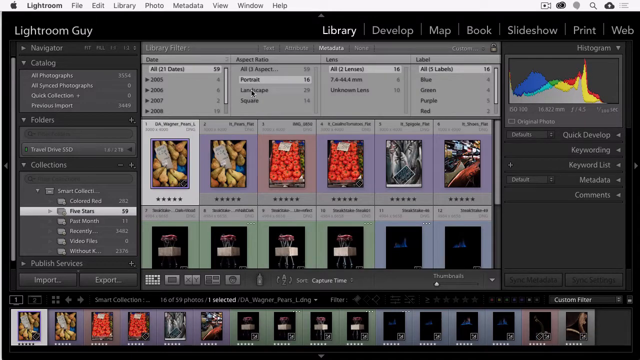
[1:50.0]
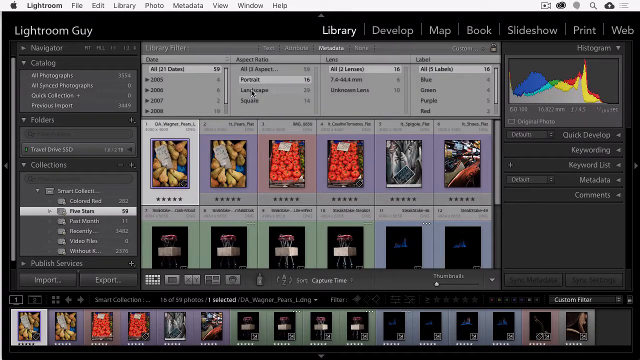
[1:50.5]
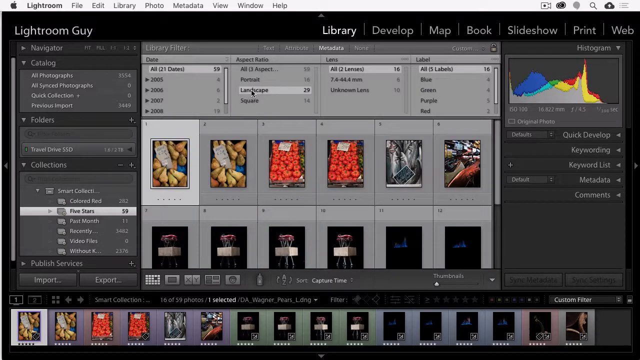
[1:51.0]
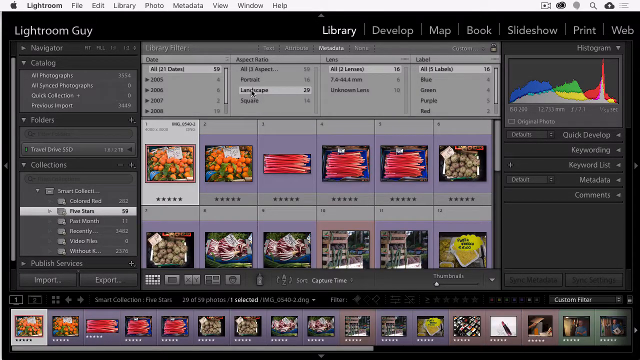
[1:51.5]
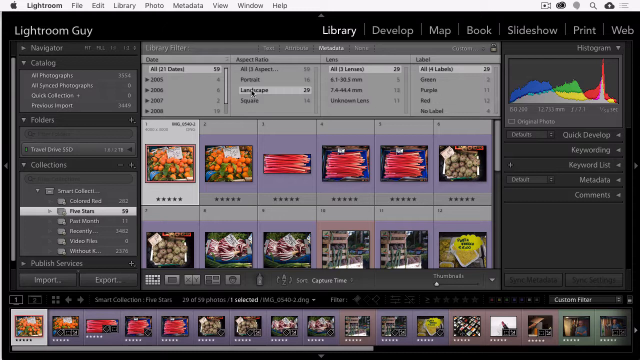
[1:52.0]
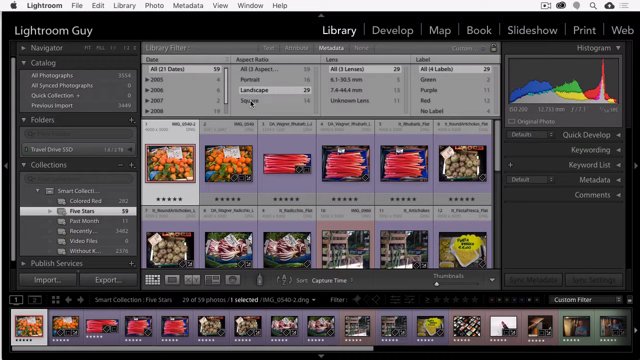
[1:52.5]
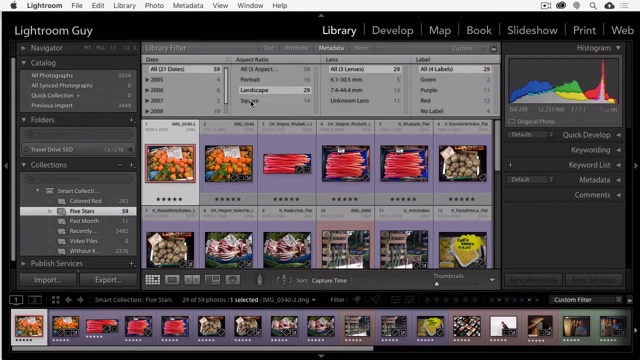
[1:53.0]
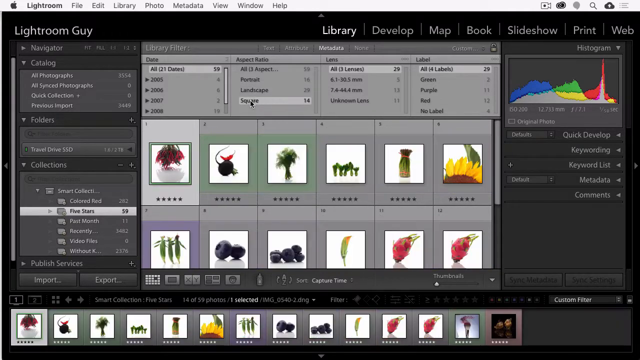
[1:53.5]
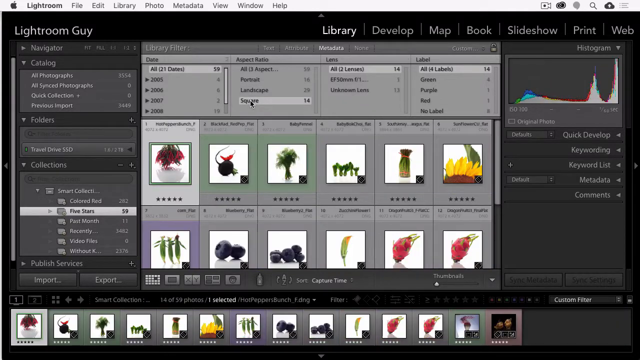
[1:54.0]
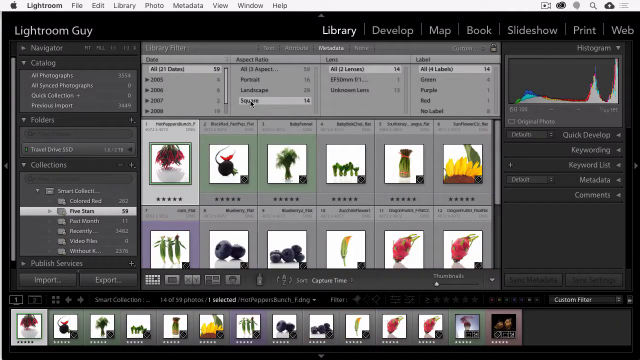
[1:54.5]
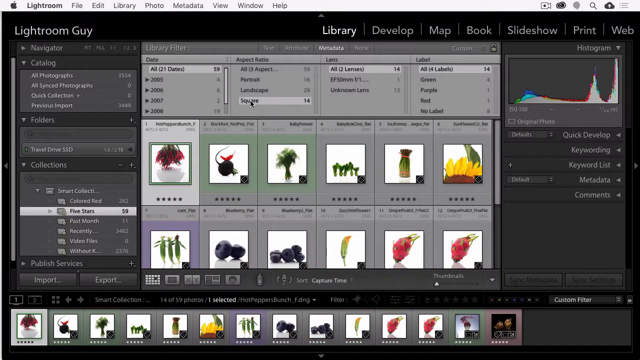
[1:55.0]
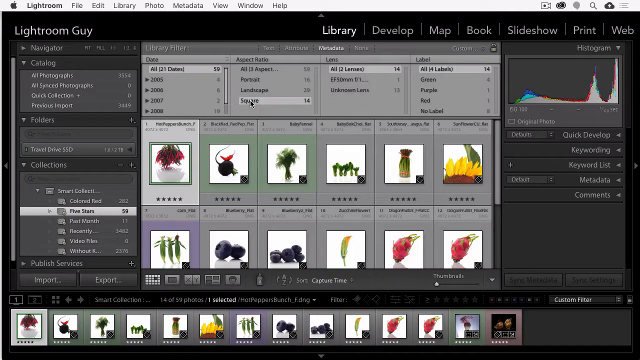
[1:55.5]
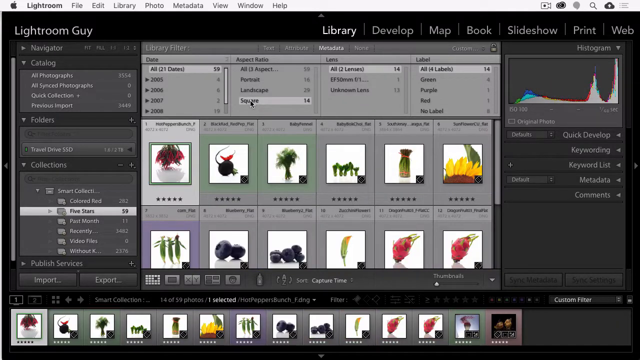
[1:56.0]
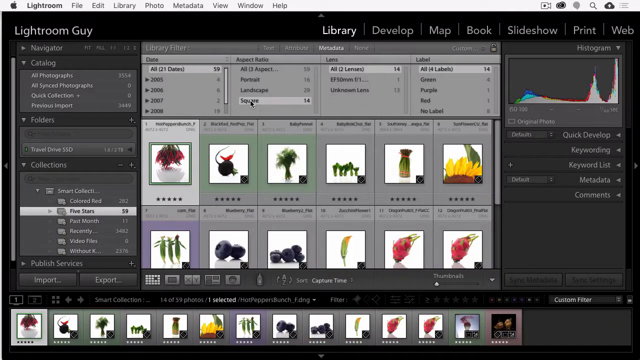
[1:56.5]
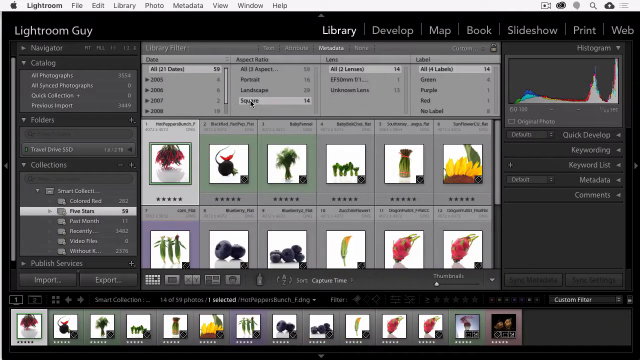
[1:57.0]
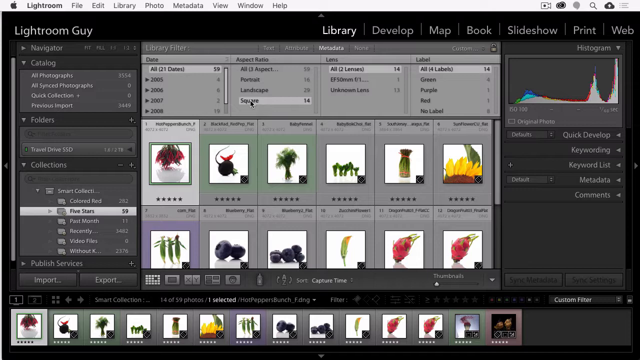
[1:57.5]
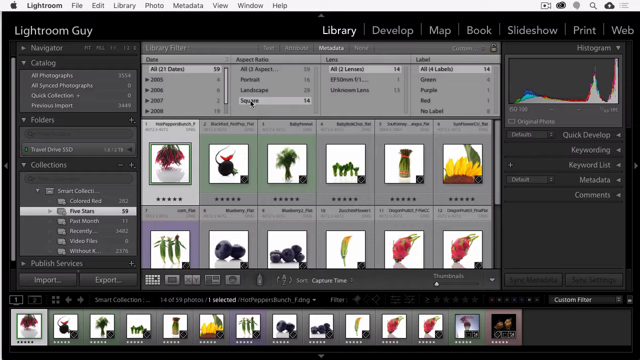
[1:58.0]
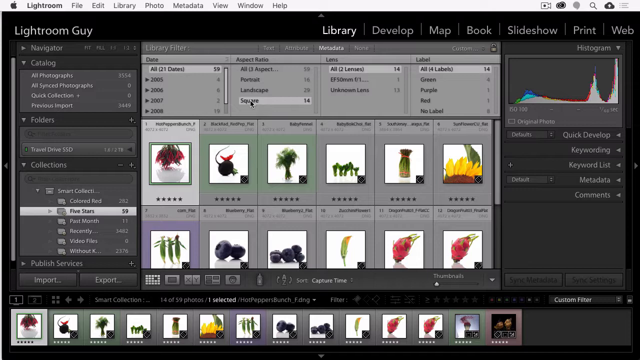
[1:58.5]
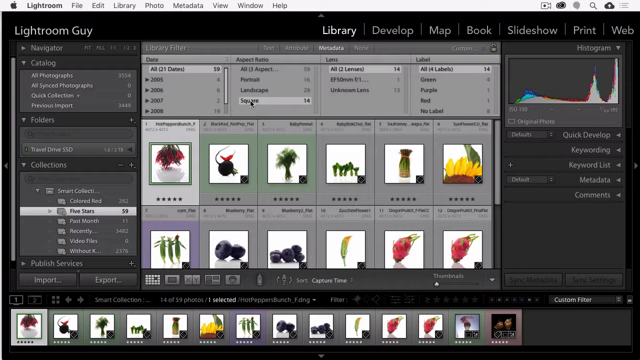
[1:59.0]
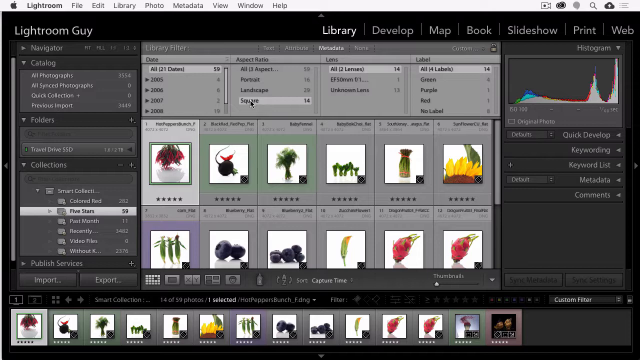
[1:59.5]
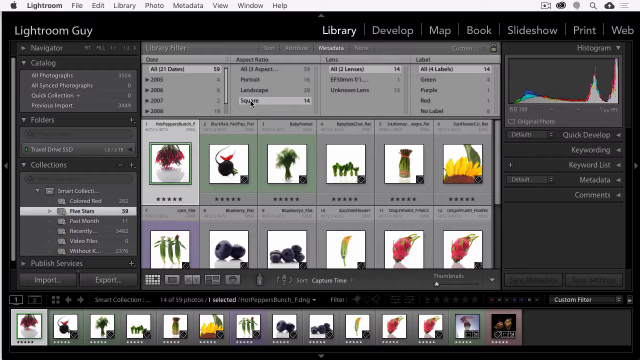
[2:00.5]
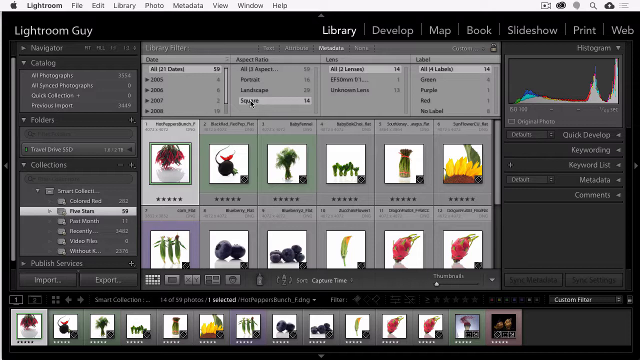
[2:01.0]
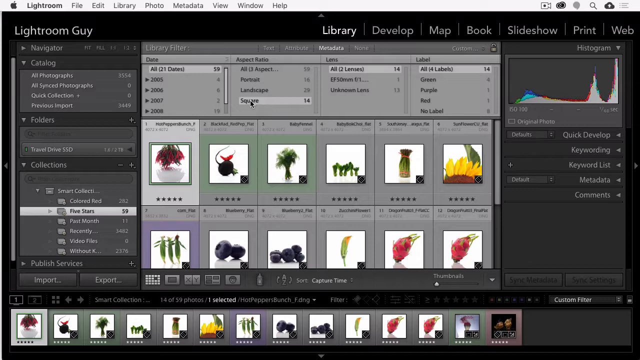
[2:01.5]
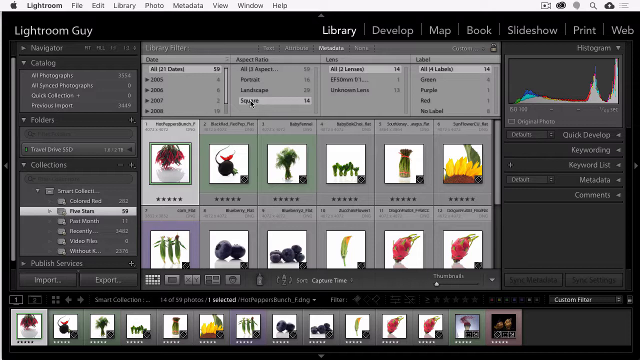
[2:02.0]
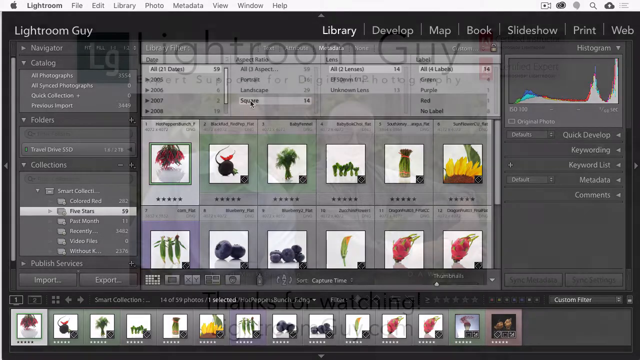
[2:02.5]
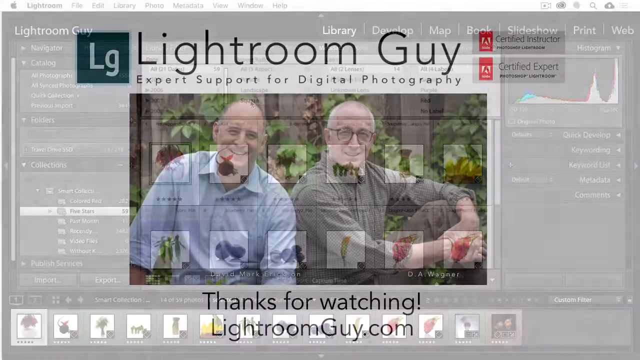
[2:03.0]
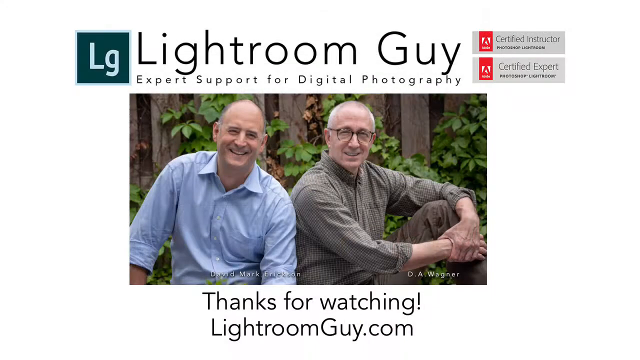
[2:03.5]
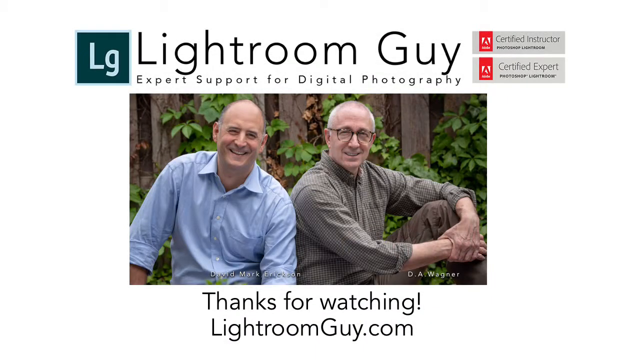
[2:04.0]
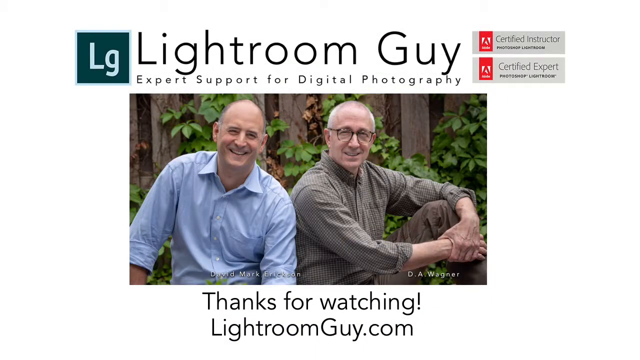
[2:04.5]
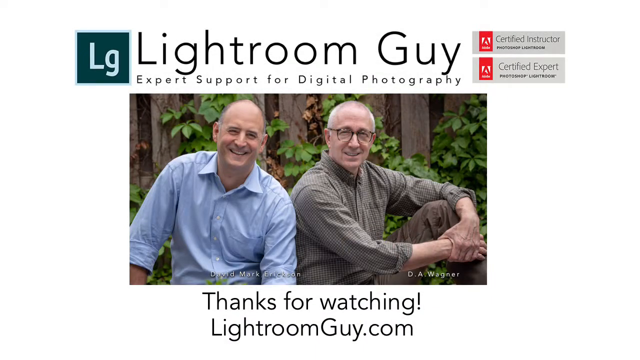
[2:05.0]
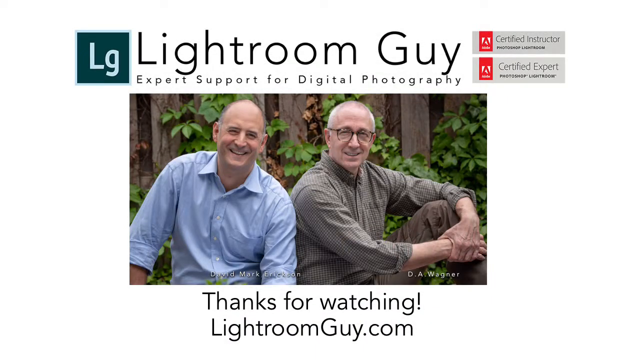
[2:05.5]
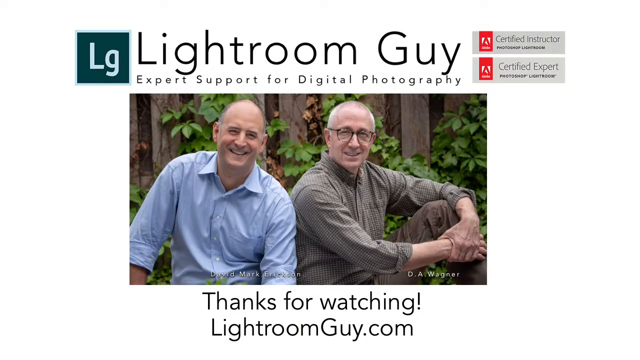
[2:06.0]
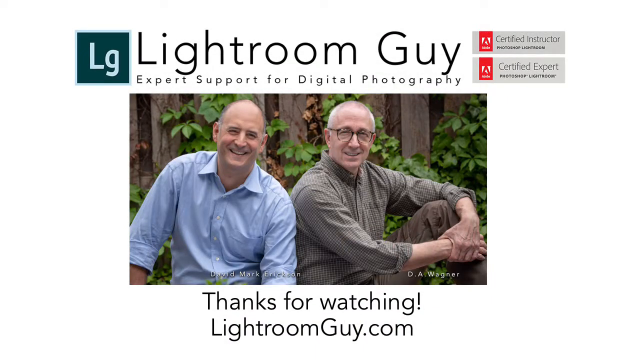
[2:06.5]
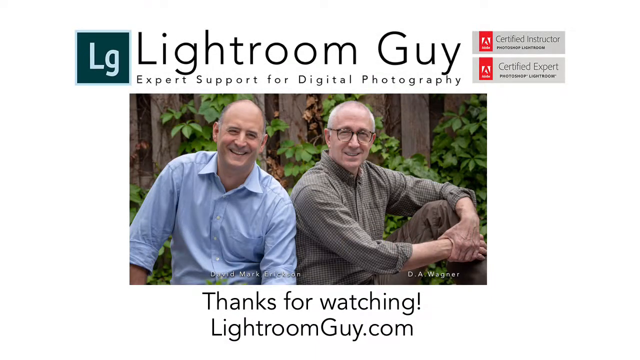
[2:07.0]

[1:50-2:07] The user is still on five stars in the Collections panel and clicks through the aspect ratio options under metadata. Portrait has 16 next to it, Landscape has 29, and Square has 14. A histogram graph is on the right of the page and changes as different aspect ratios are clicked. The histogram is made up of gray, blue, green and red. With the square aspect ratio, the histogram shows all the colors; otherwise it is mostly grey, with the other colors shown a little. "THE END OF" is then shown with a picture of two old men: David Mark wearing a blue shirt and D.A. Wagner wearing a brown shirt. One of them has glasses on. The text "thanks for watching Lightroom.com" is at the bottom of the picture.